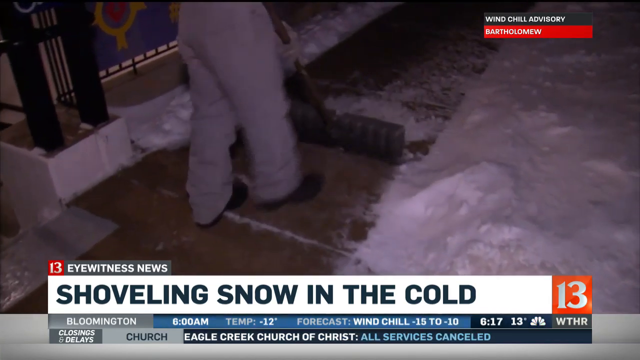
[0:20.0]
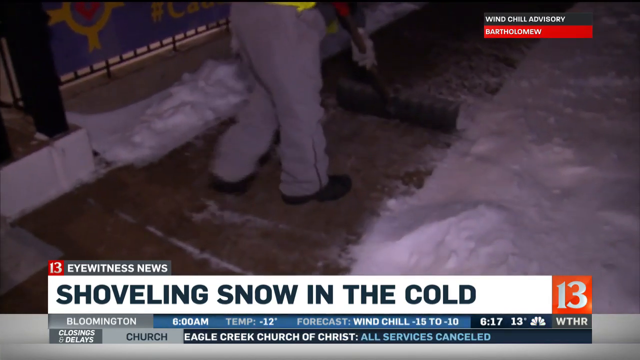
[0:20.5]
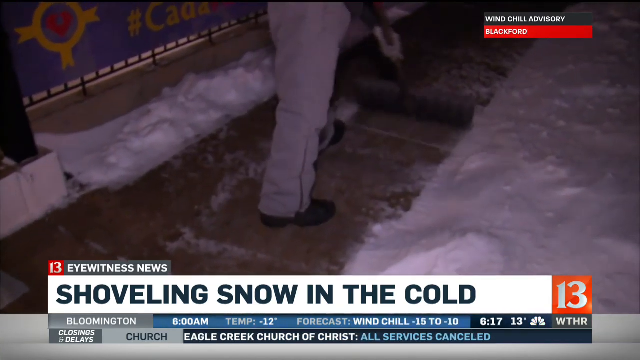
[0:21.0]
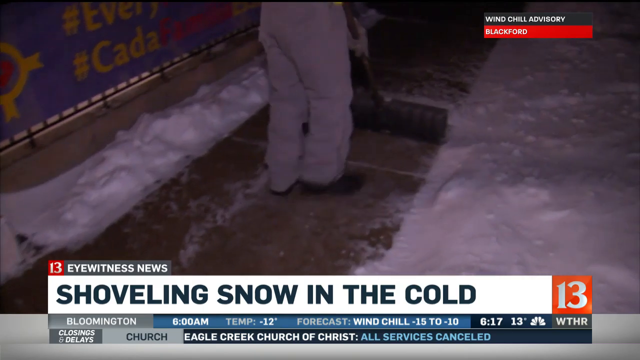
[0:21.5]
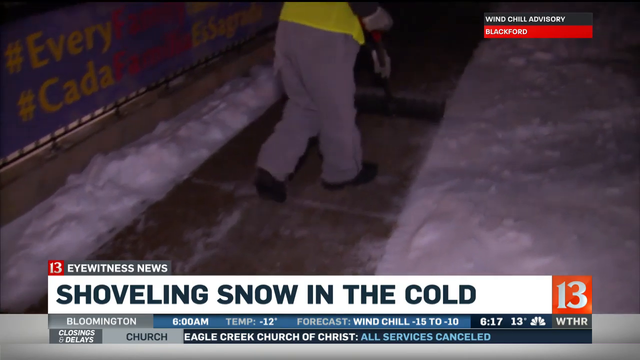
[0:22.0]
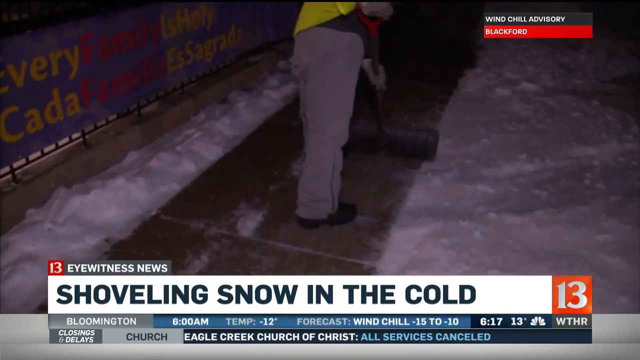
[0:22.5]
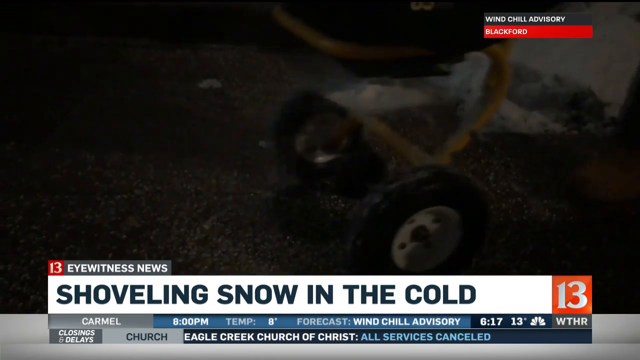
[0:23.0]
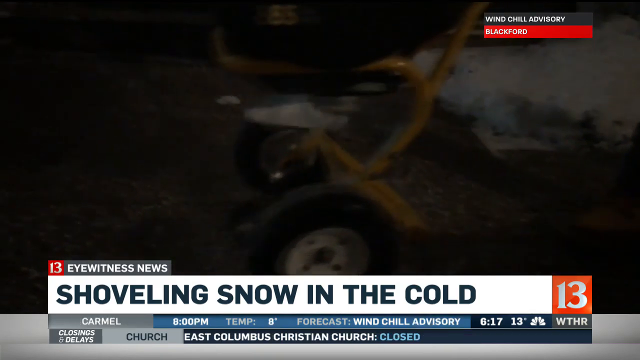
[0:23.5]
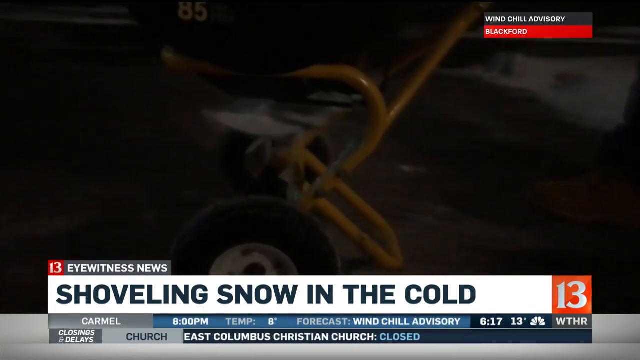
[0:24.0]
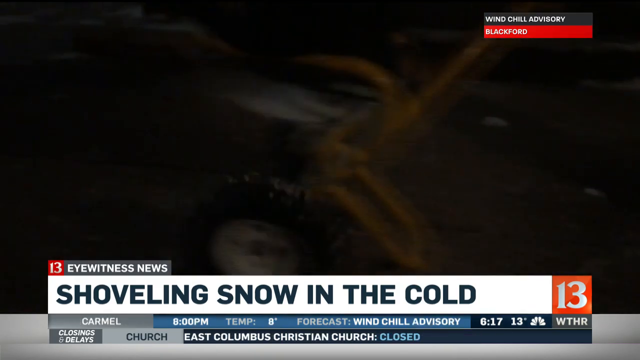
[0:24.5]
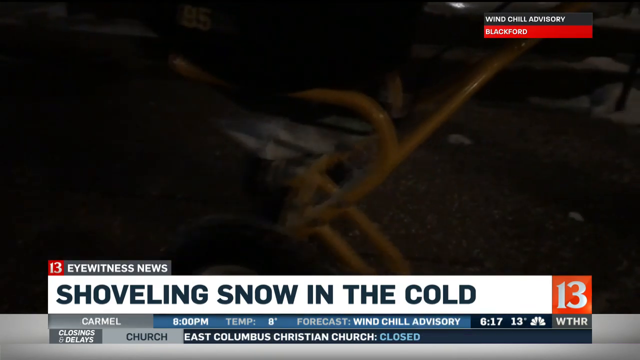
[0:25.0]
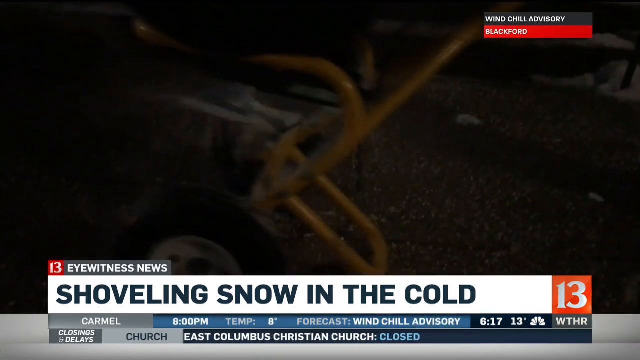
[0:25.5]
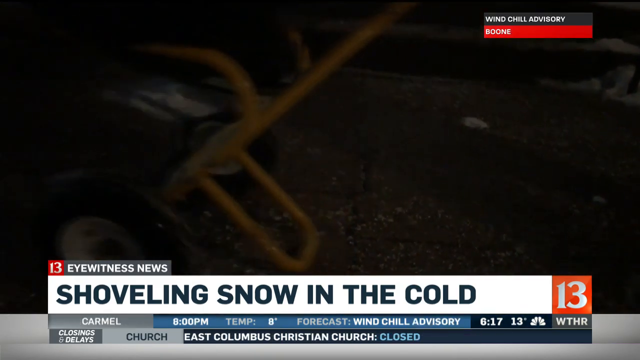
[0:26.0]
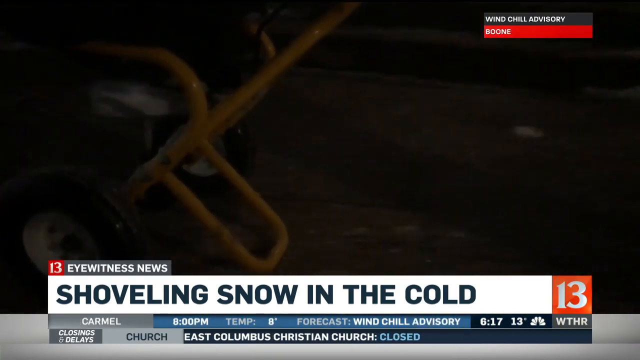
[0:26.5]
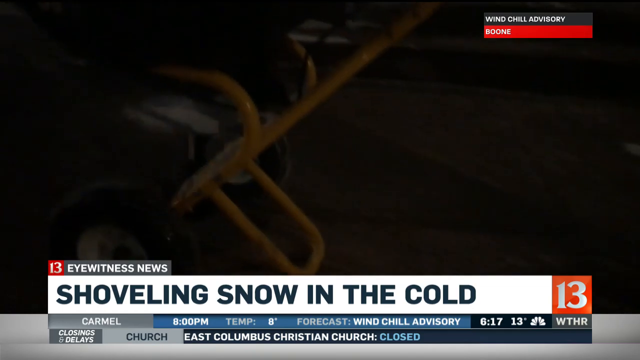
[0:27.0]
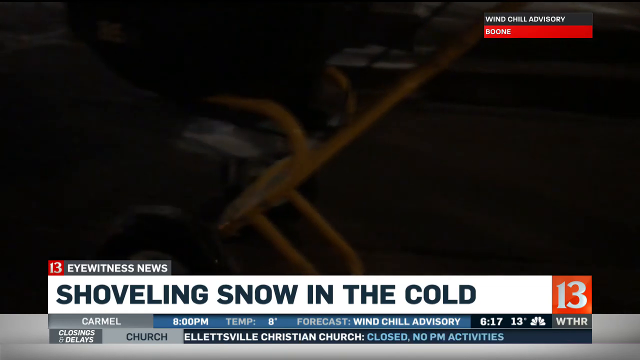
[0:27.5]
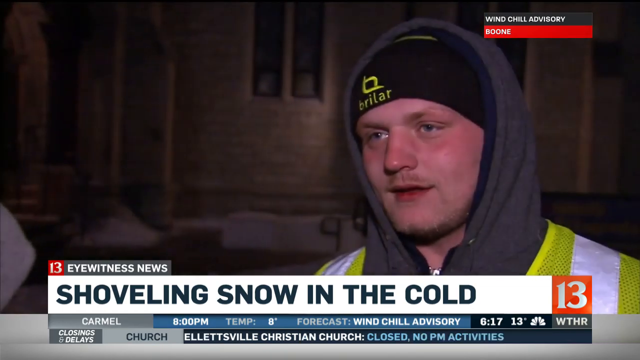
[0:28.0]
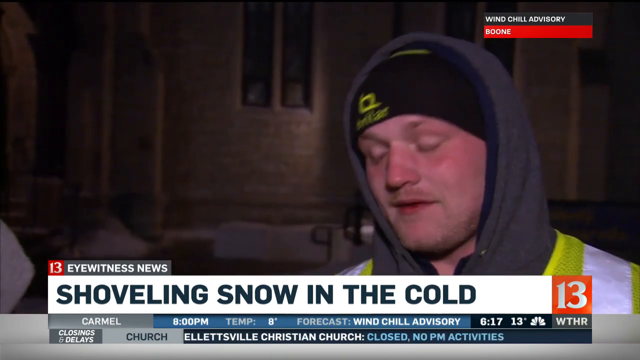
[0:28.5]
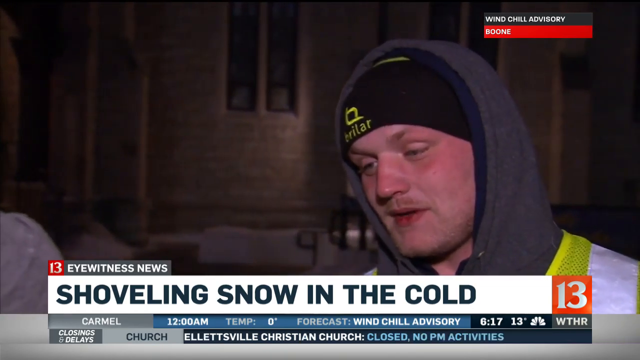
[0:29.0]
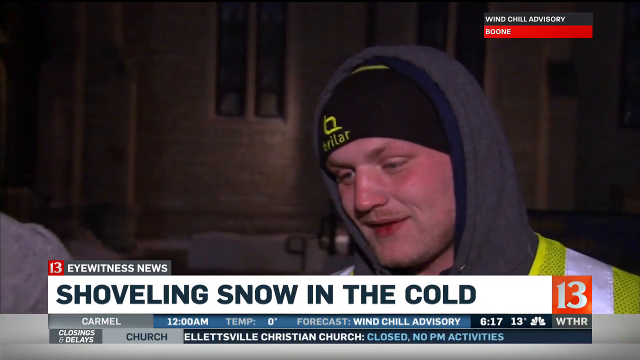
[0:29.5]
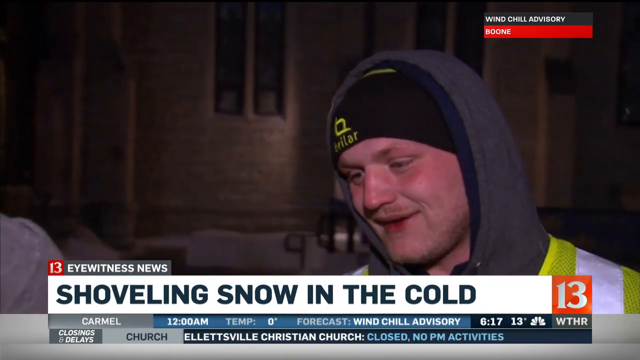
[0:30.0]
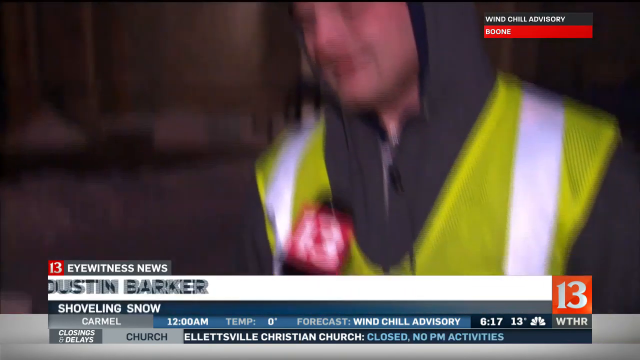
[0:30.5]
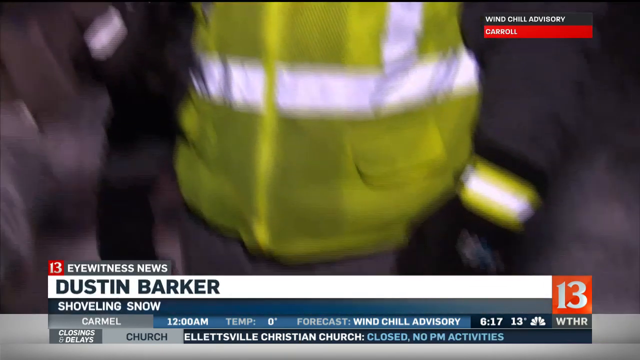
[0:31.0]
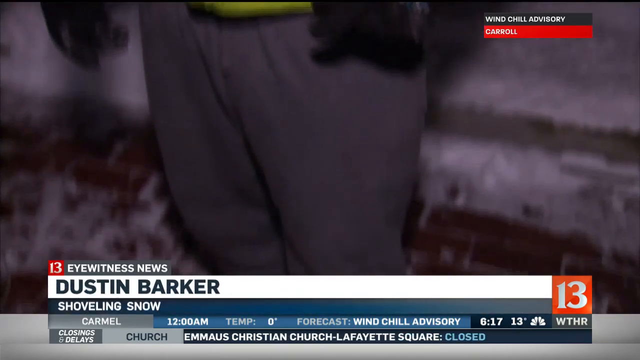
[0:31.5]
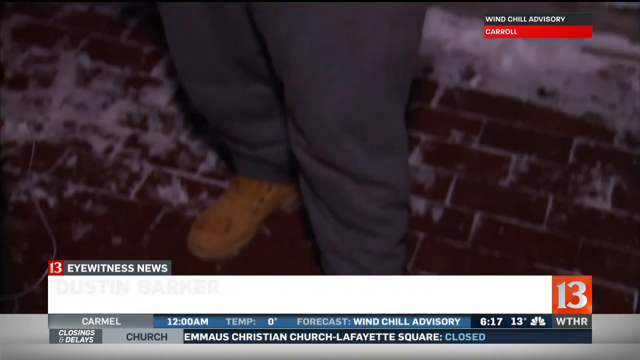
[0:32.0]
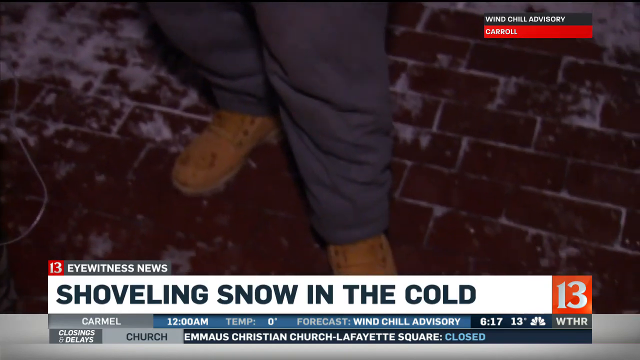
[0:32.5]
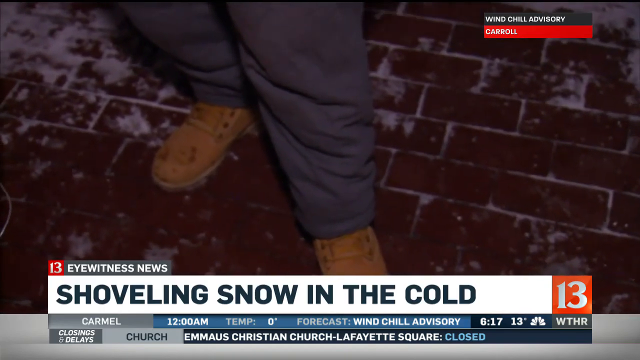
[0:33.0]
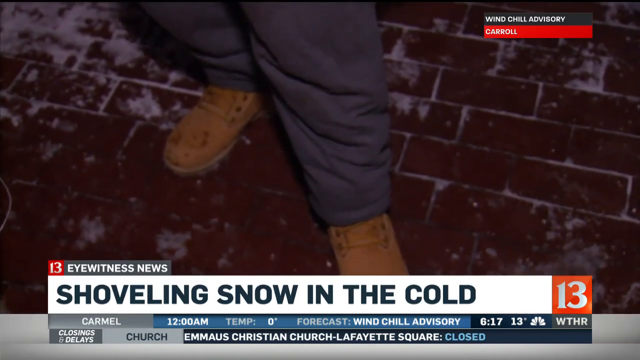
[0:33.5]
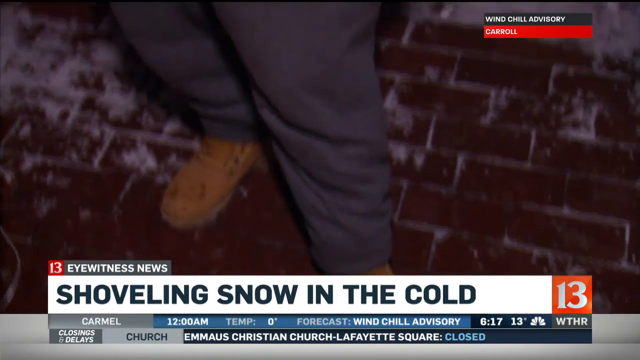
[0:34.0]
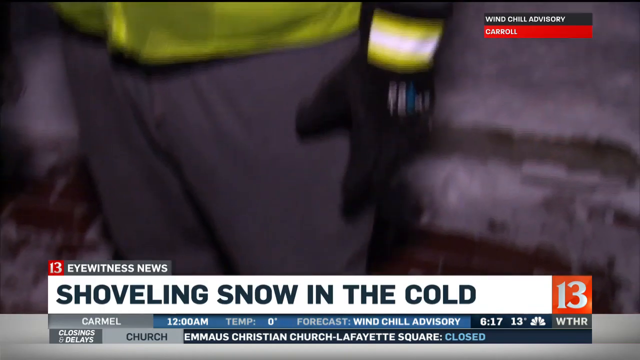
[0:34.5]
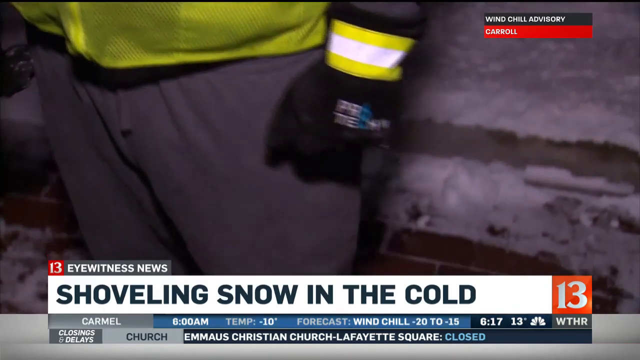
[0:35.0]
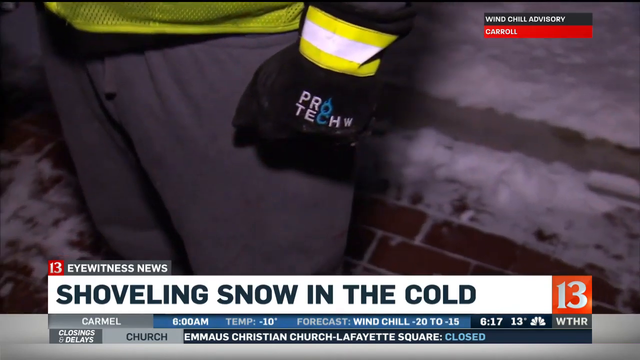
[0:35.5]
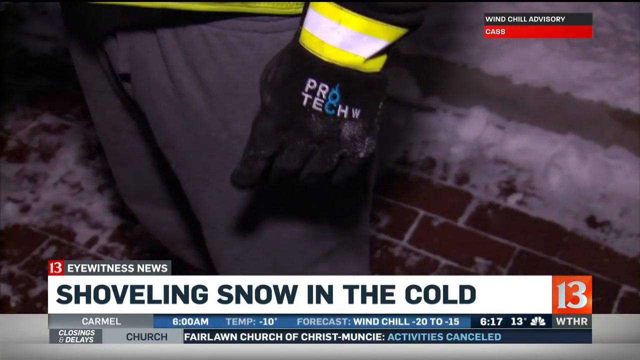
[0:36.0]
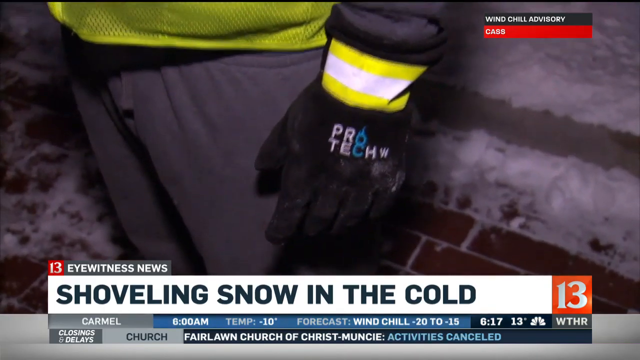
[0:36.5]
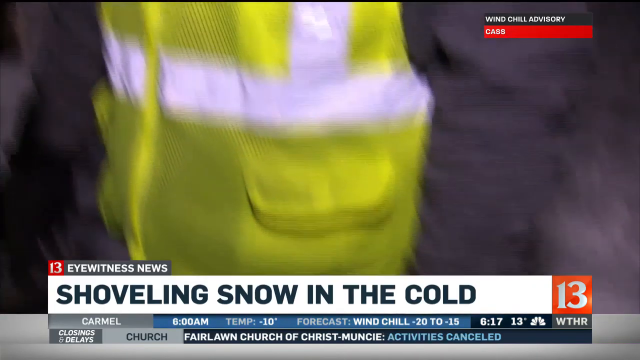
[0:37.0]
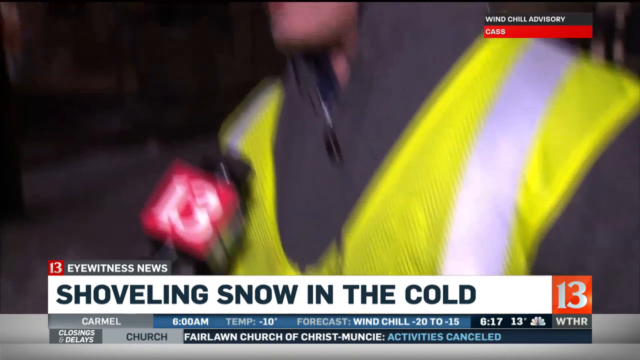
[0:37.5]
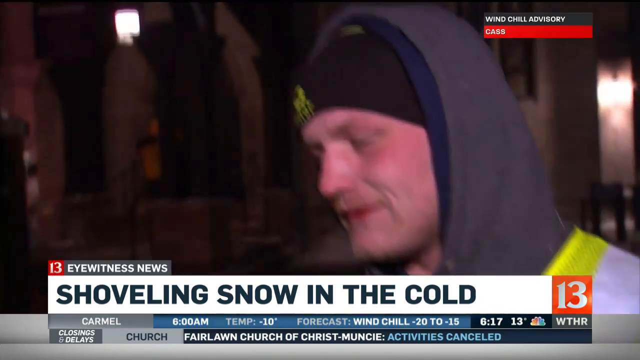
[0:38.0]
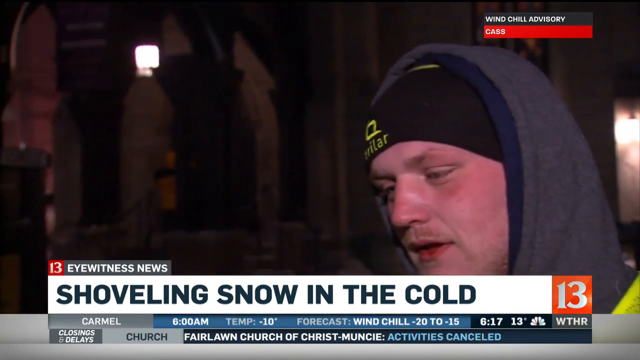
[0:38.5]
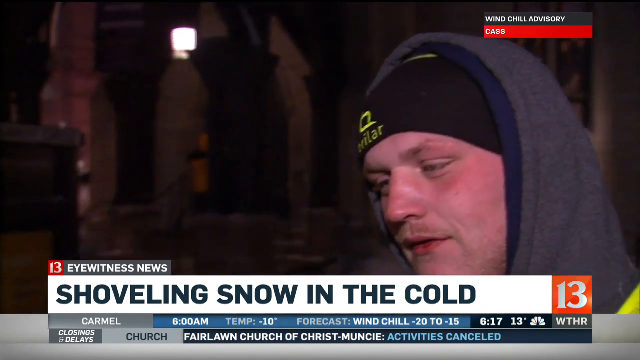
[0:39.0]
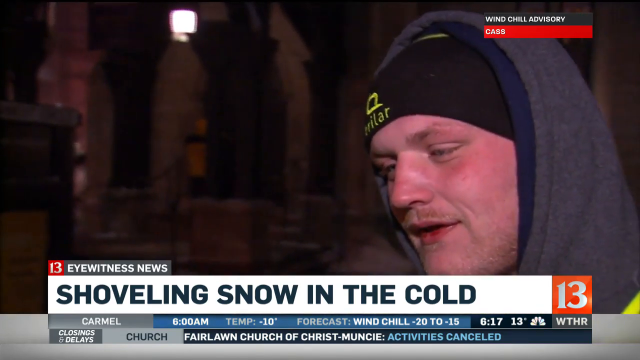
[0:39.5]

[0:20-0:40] A man wears overalls and boots. People drive machines while it snows outside. A young man in gray pants and a yellow vest talks to the press. The workers wear gloves as they shovel snow to clear the fronts of people's yards. Dustin Baker is one of the workers. Peggy wears black gloves with "ProTech" written on them, presumably the name of the company they work for.